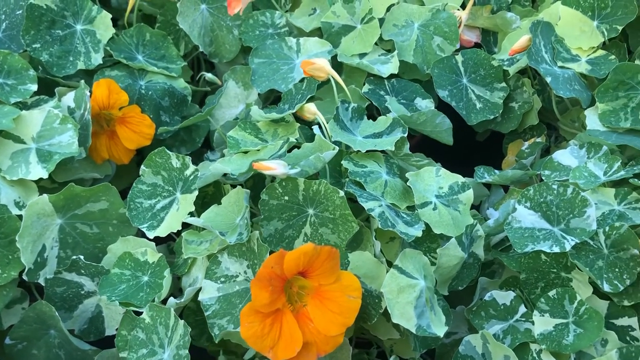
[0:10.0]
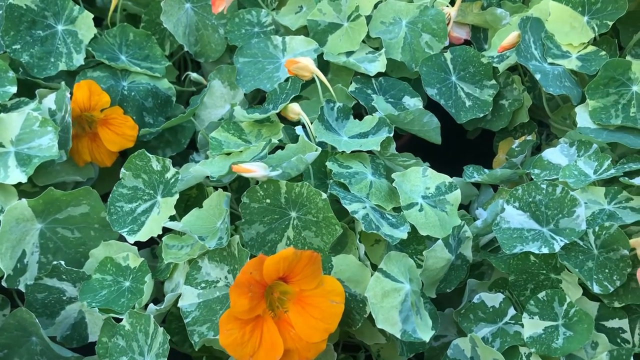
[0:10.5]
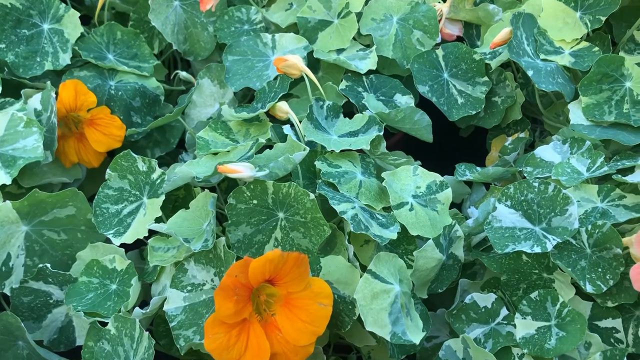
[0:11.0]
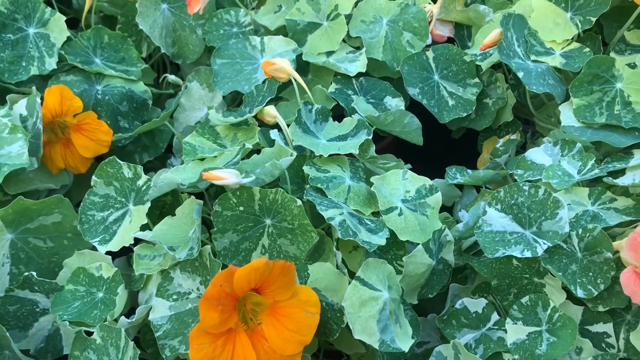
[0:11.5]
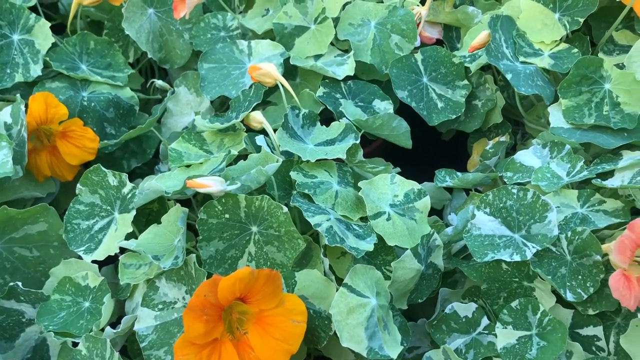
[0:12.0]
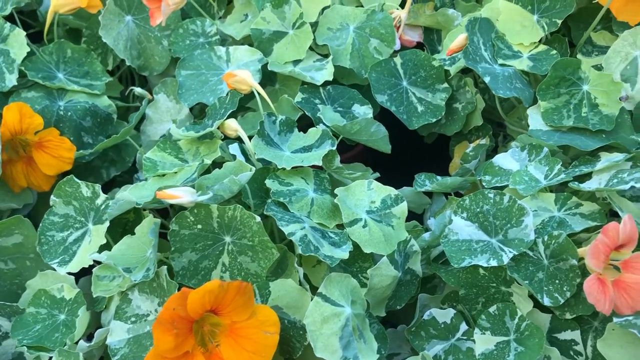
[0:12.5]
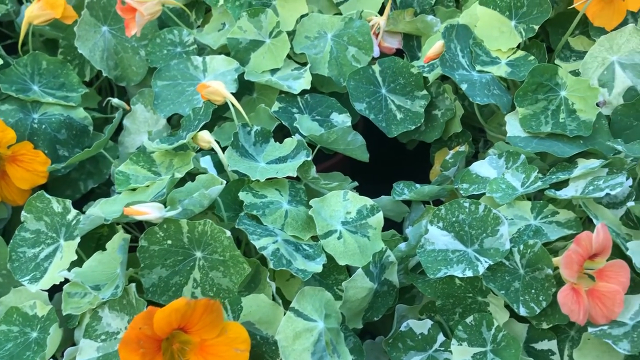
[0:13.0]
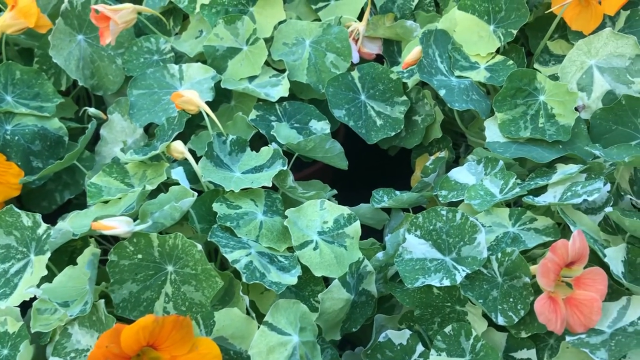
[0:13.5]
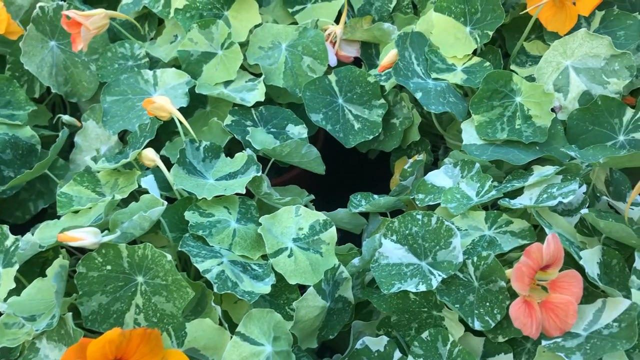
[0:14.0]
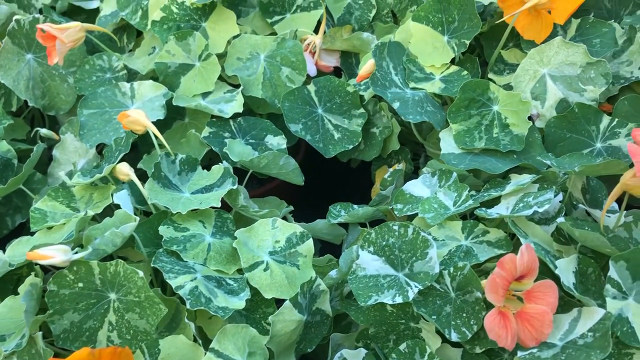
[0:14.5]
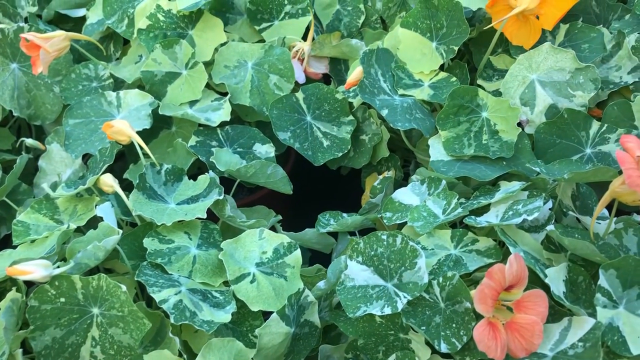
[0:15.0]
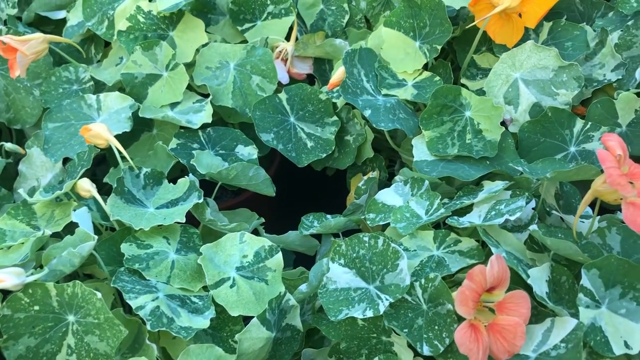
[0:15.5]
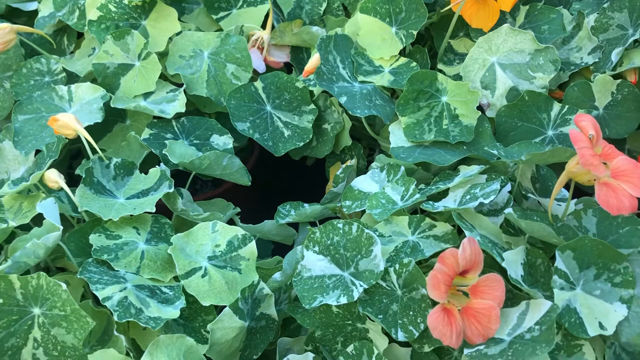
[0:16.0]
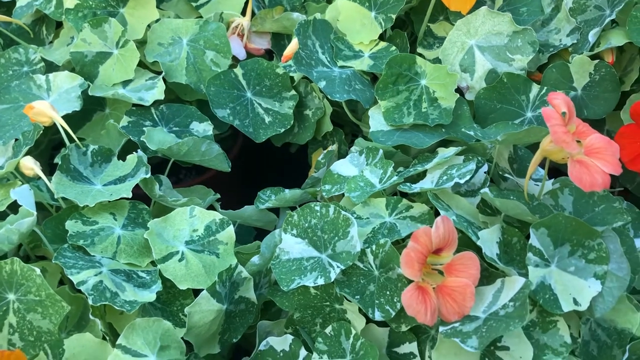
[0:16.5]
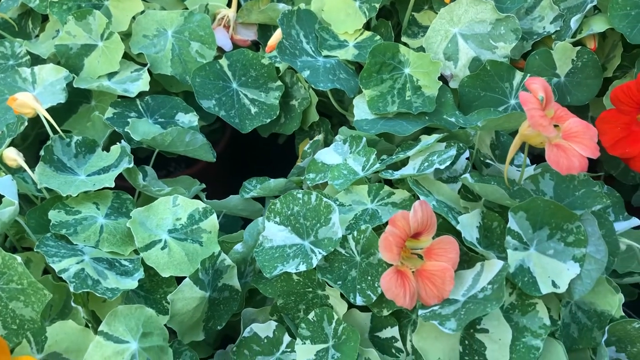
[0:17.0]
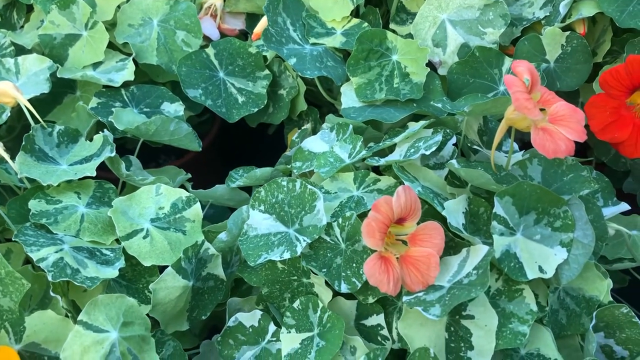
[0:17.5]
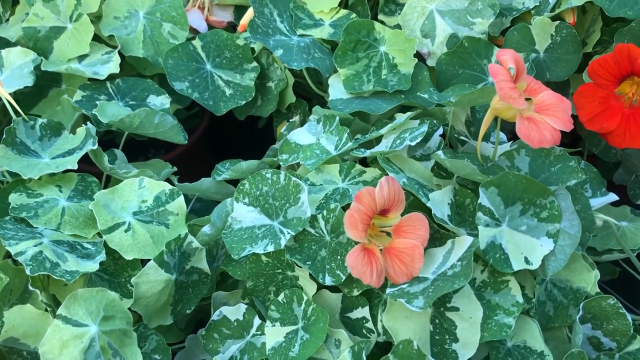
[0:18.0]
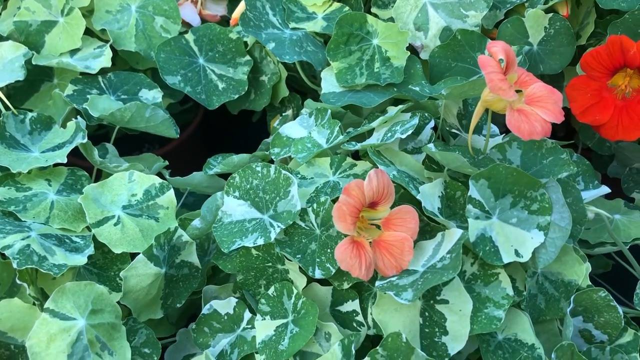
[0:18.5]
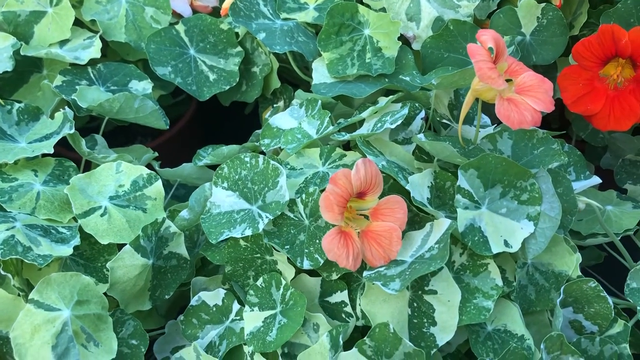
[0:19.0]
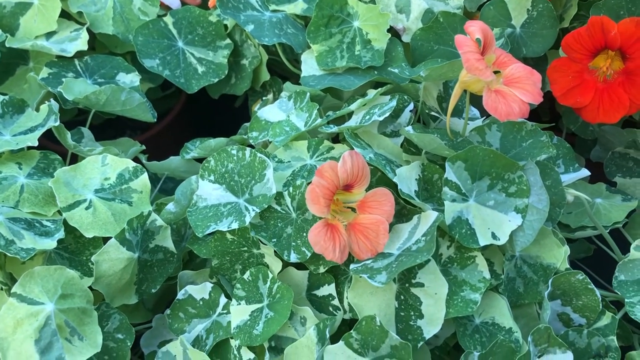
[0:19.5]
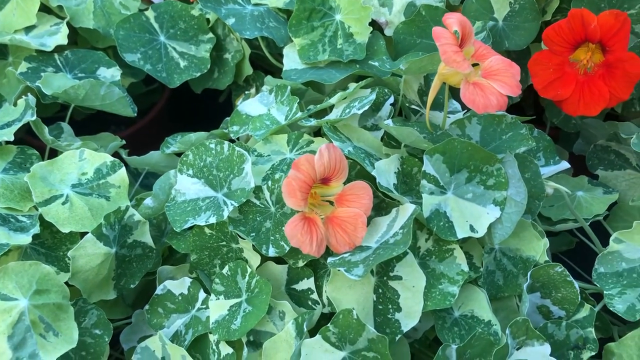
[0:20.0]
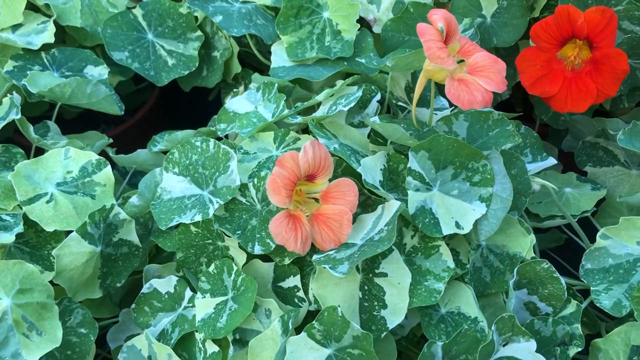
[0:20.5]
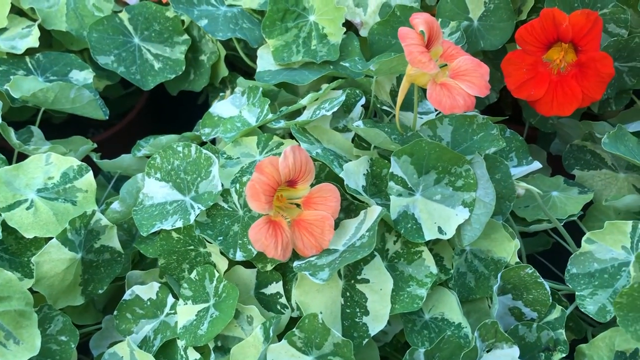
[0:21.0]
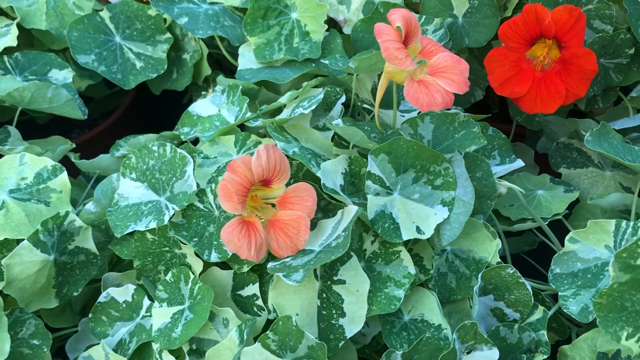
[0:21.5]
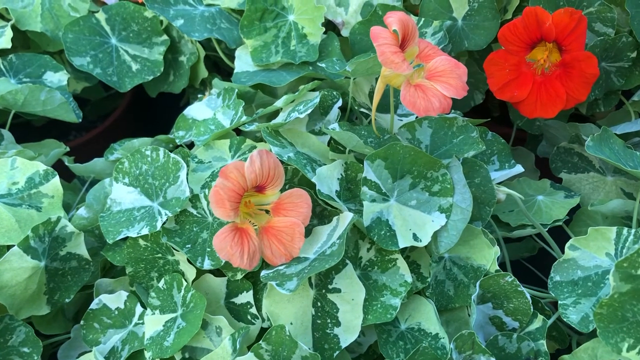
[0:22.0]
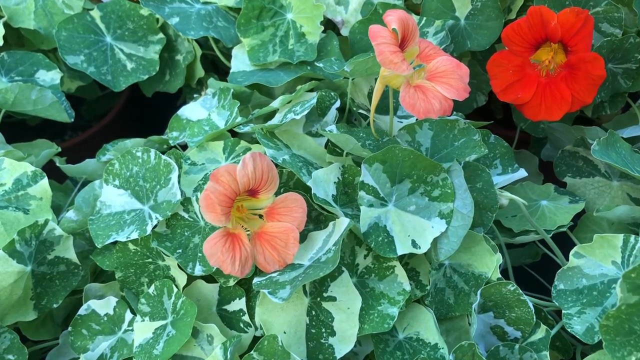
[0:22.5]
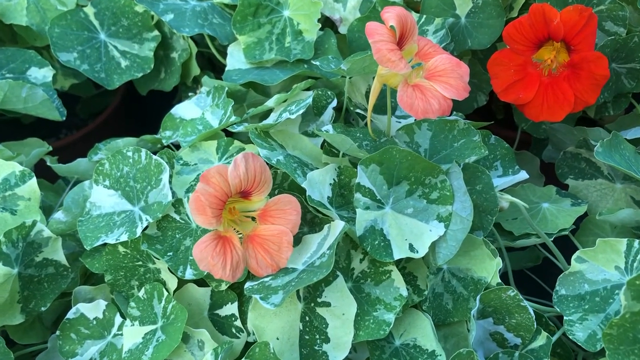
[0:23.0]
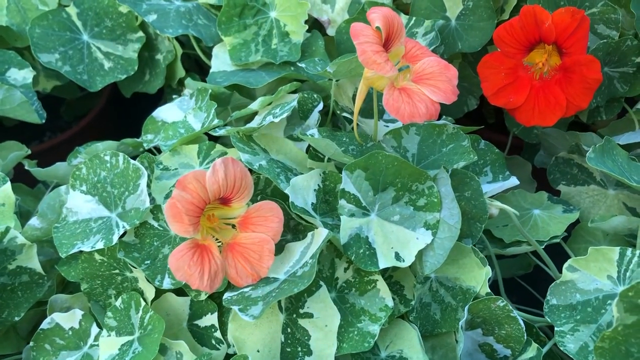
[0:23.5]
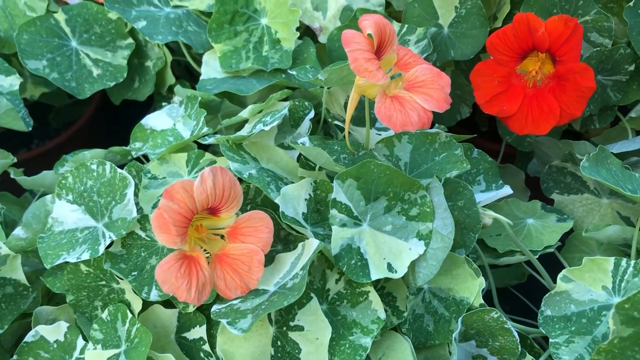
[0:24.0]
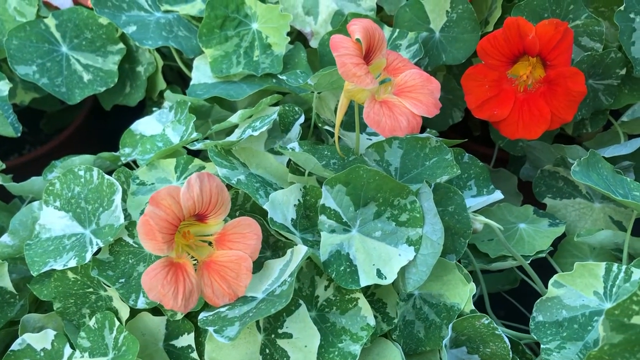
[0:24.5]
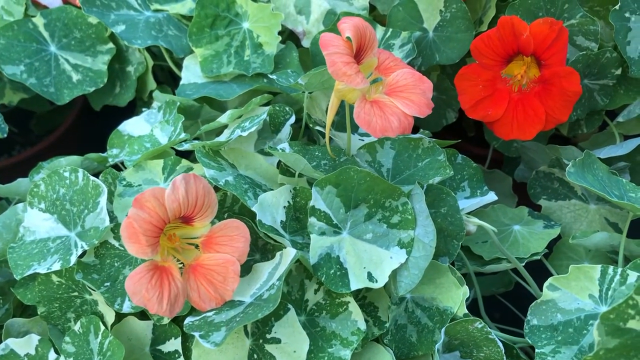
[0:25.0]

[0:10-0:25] Lots of little, delicate flowers appear in colors that look pink, peach, red, orangish and yellowish. Each flower has five petals. They are surrounded by what look like green leaves, which are shaped like the flowers and have dark green and light green on them, with what seem to be lines and splotches of white areas. The plant seems to be a bush rather than flowers in a planter. Some flowers have not bloomed yet, with only buds emerging, and most of the buds are yellow; other flowers are just beginning to bloom, halfway open, neither closed buds nor fully open. The leaves are very close together, seemingly packed tightly. The flowers look delicate, thin and very soft, and no bugs are visible on them.